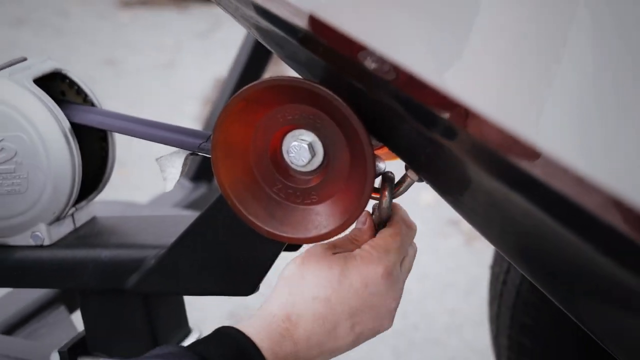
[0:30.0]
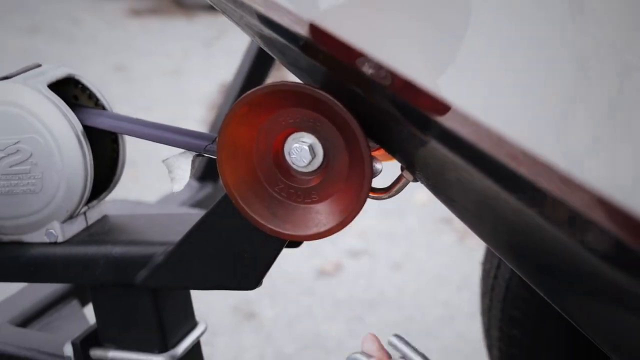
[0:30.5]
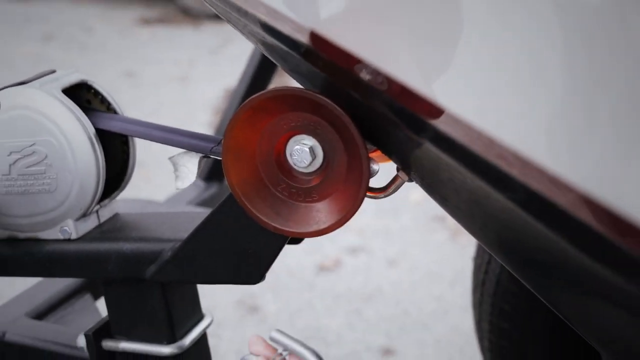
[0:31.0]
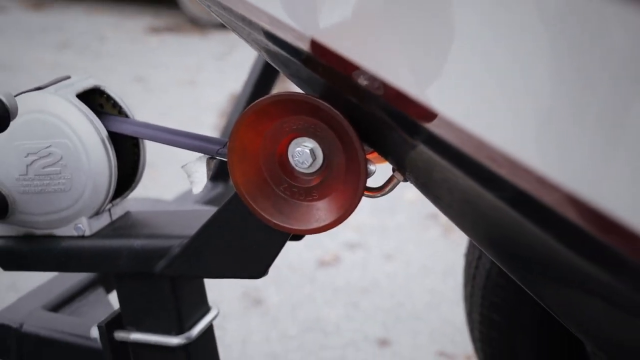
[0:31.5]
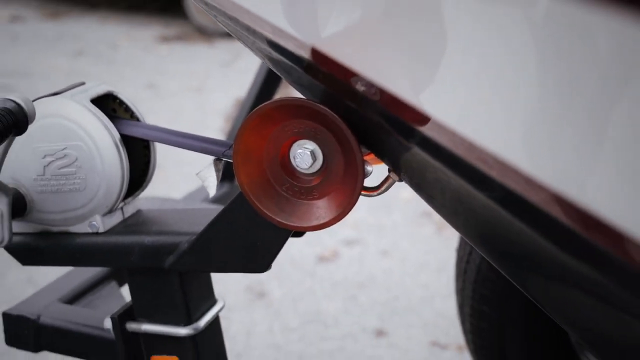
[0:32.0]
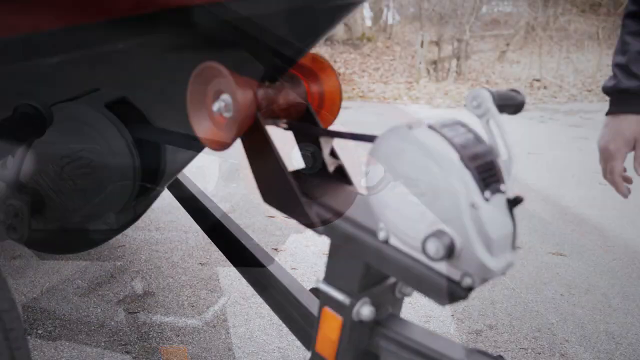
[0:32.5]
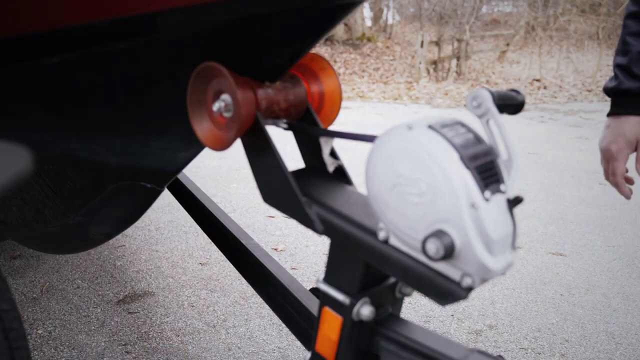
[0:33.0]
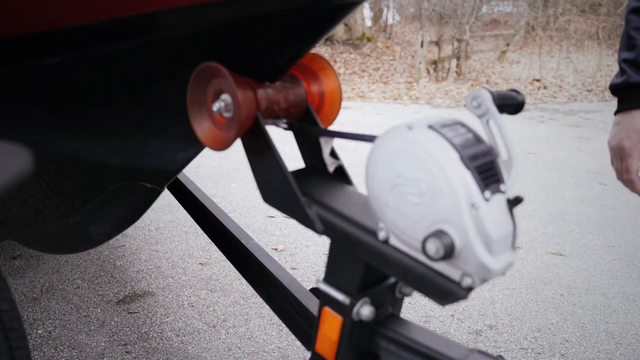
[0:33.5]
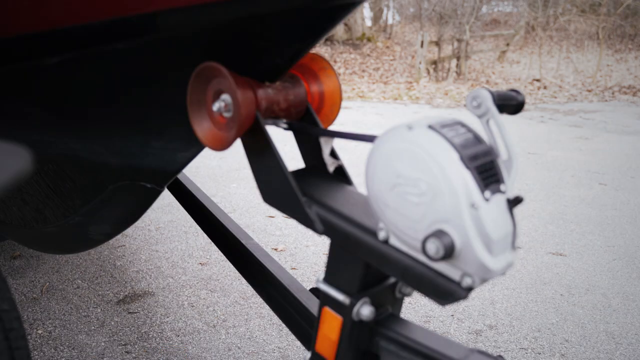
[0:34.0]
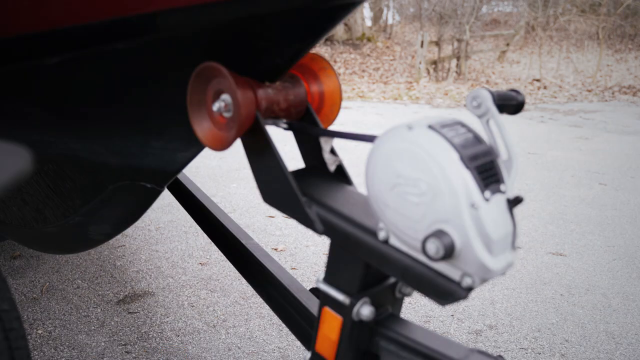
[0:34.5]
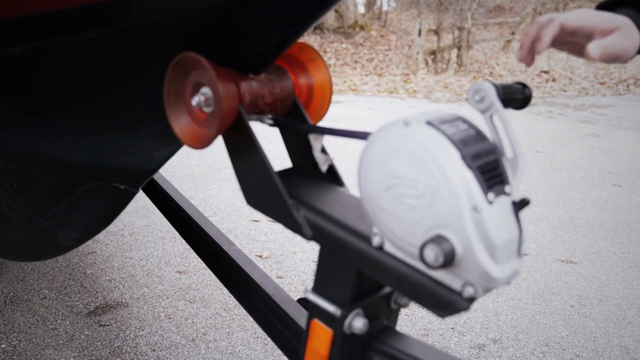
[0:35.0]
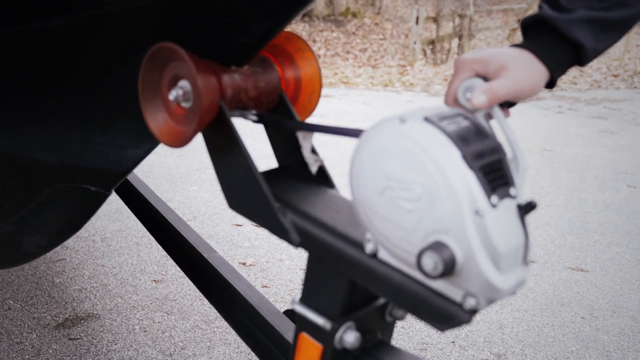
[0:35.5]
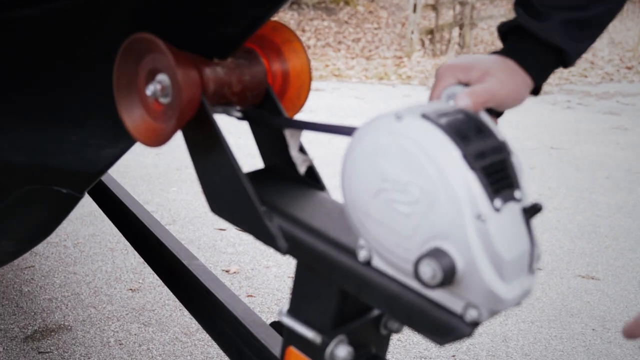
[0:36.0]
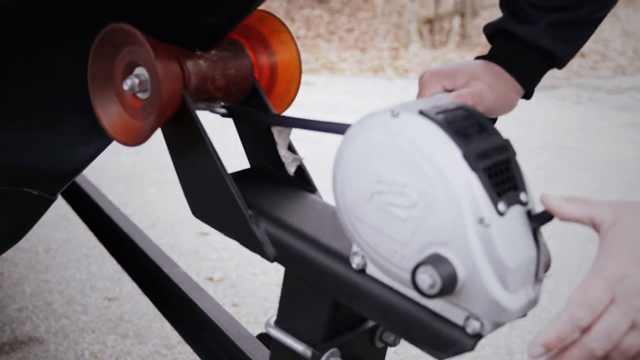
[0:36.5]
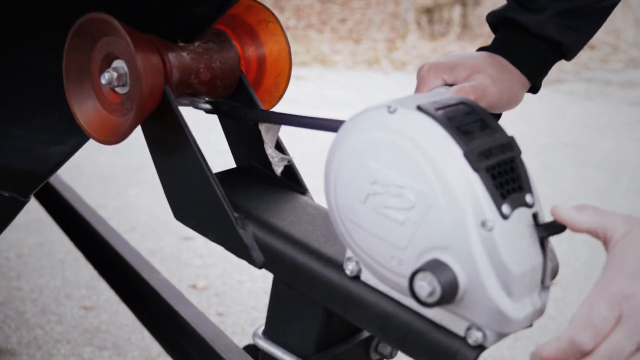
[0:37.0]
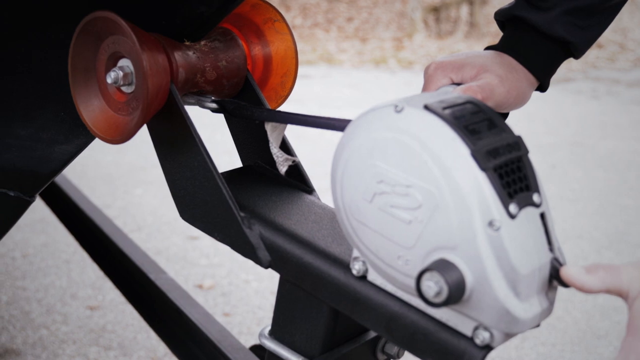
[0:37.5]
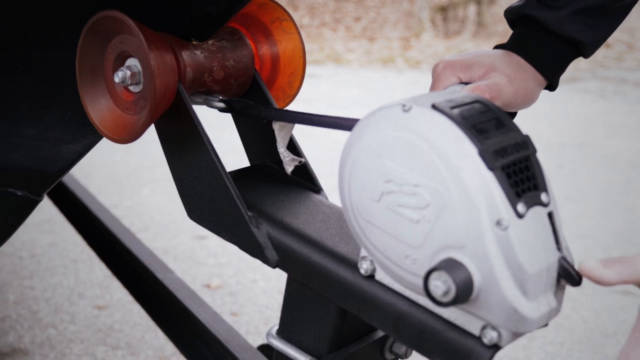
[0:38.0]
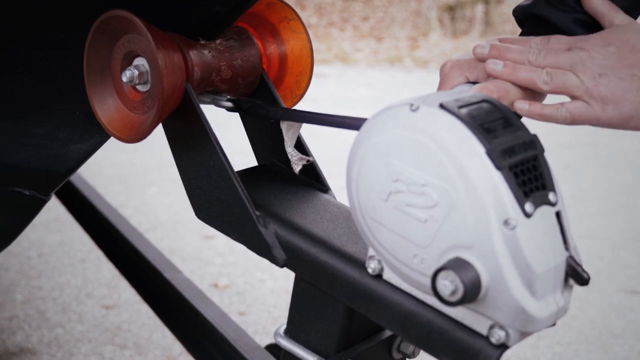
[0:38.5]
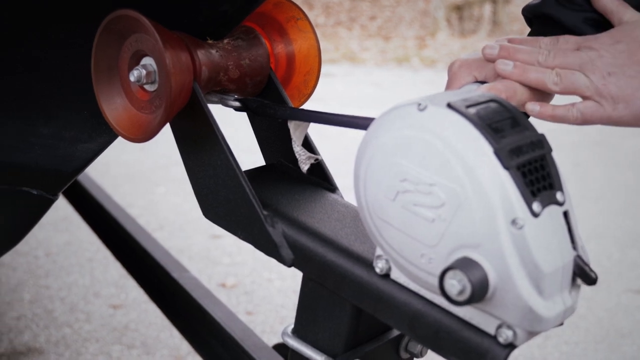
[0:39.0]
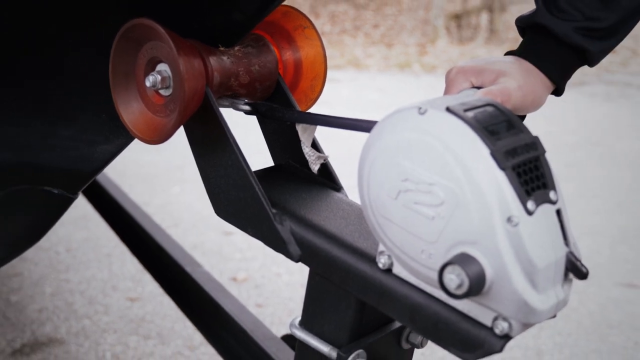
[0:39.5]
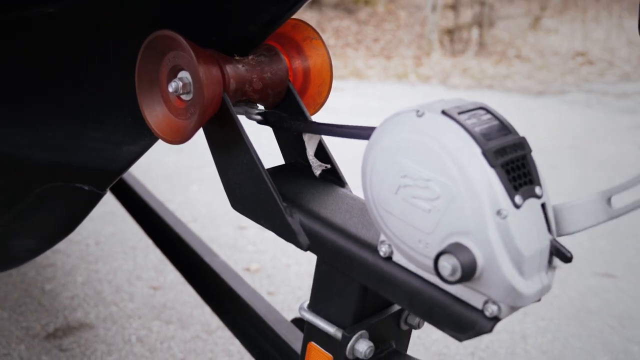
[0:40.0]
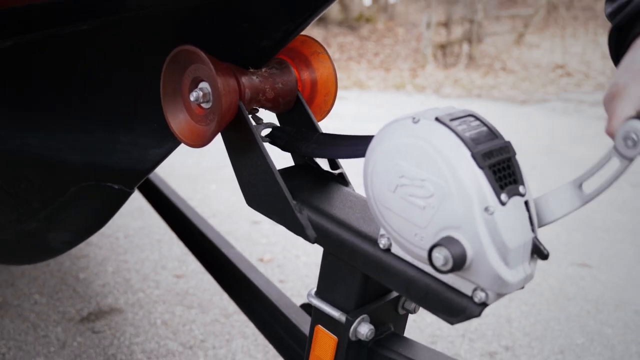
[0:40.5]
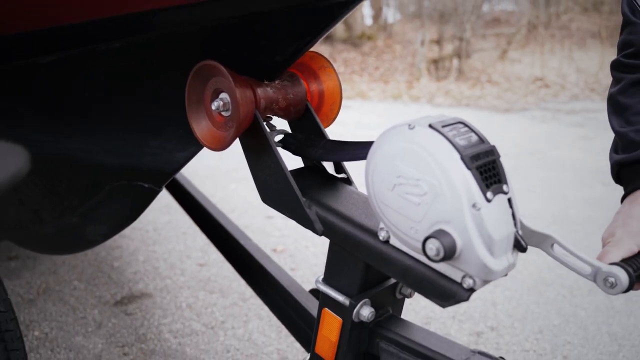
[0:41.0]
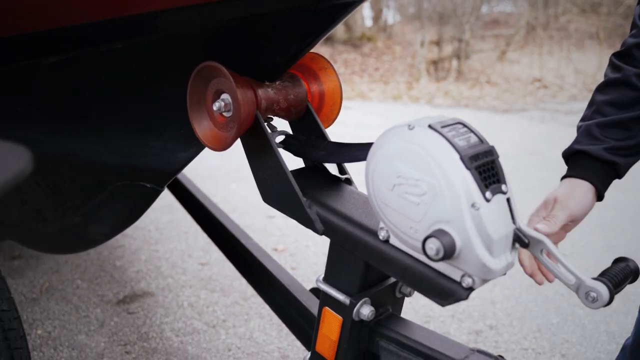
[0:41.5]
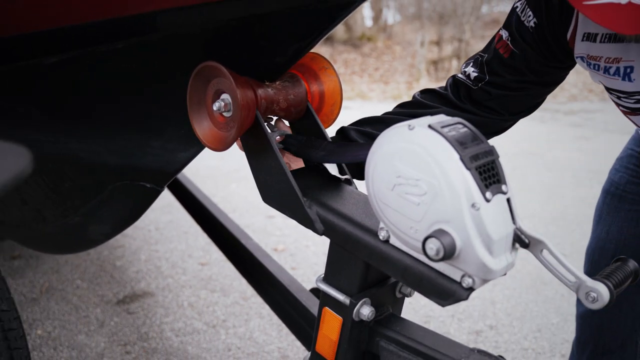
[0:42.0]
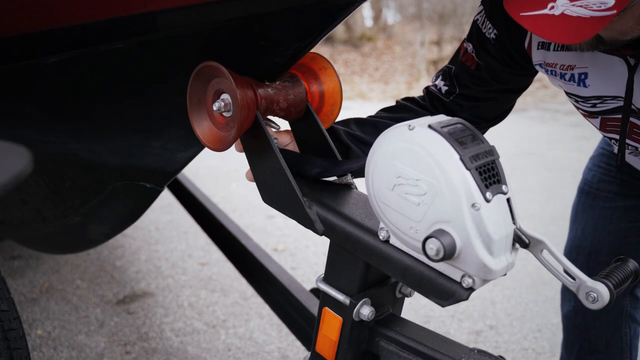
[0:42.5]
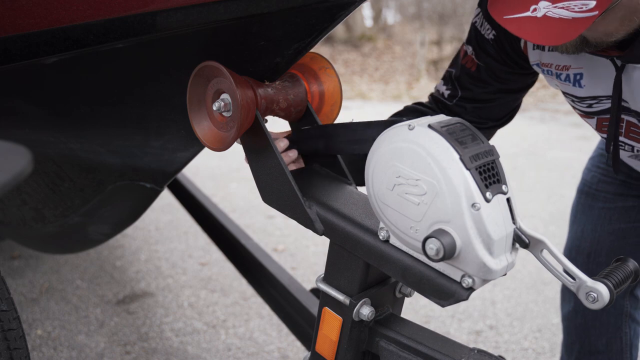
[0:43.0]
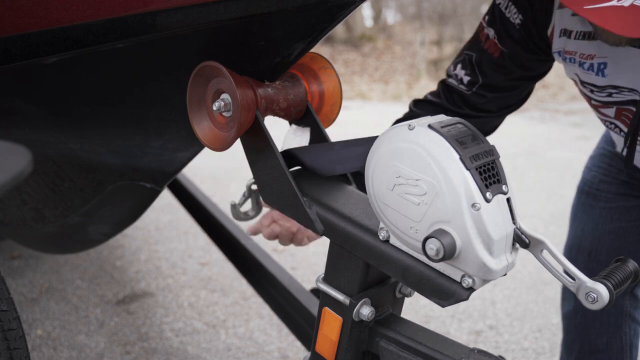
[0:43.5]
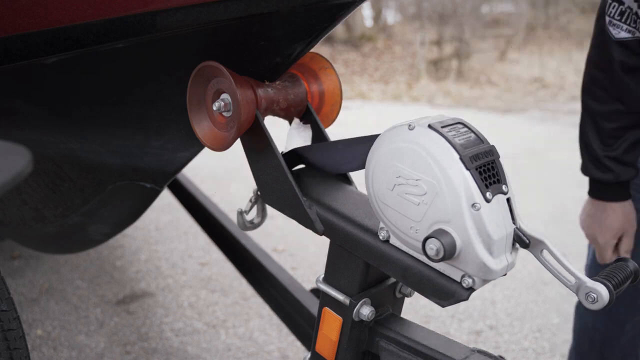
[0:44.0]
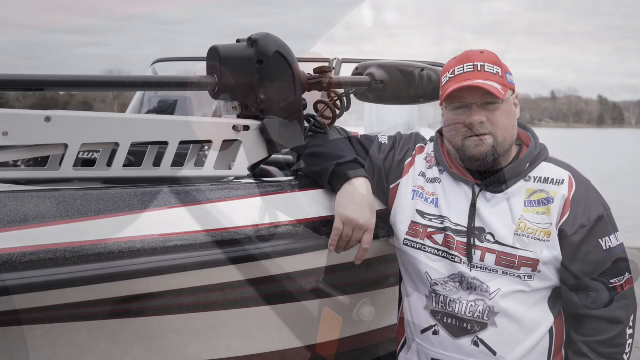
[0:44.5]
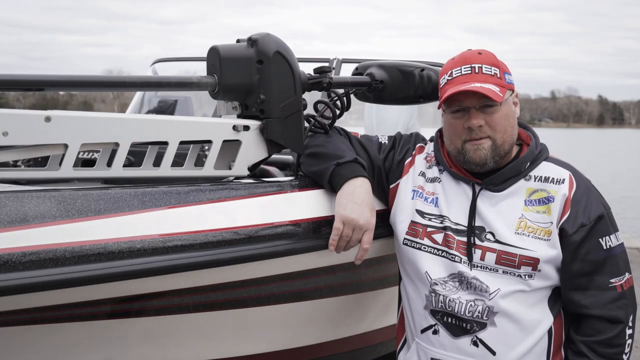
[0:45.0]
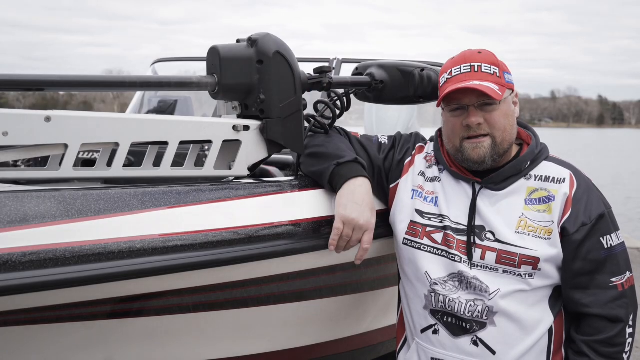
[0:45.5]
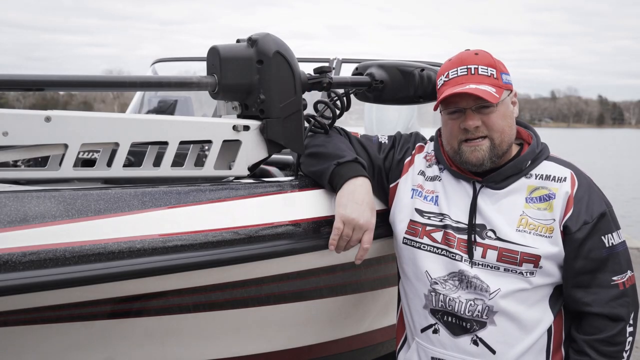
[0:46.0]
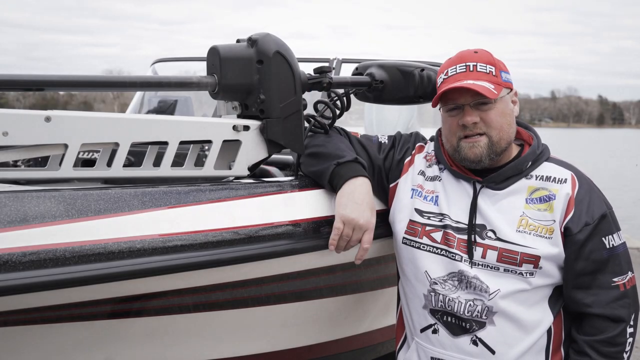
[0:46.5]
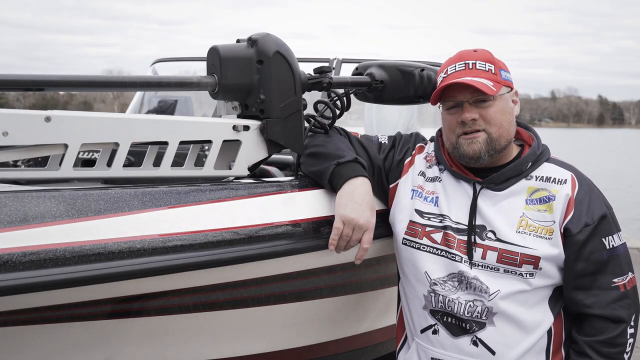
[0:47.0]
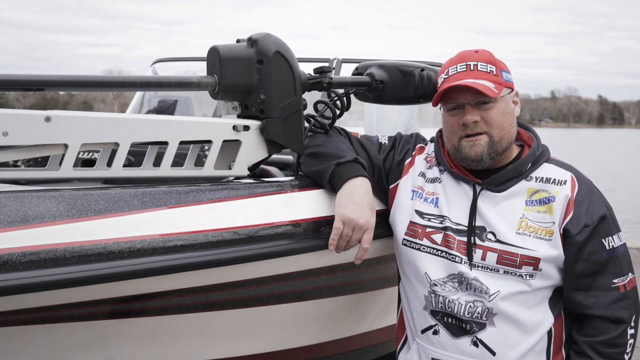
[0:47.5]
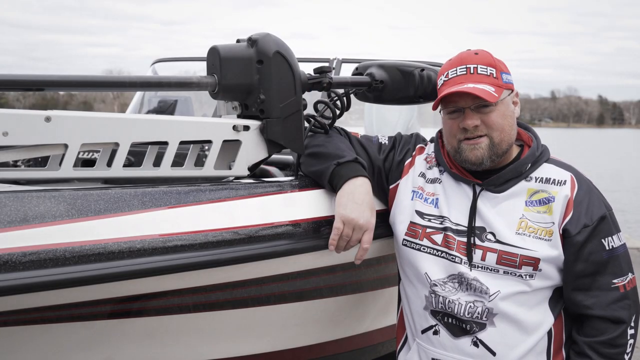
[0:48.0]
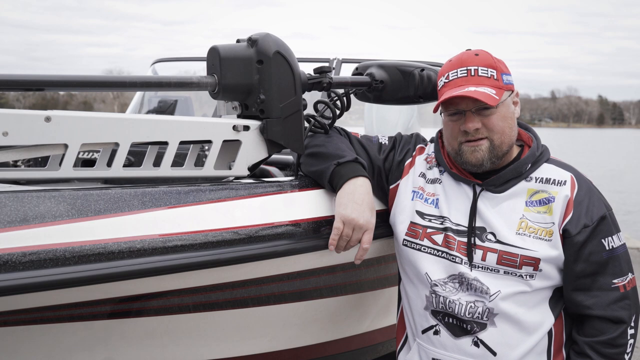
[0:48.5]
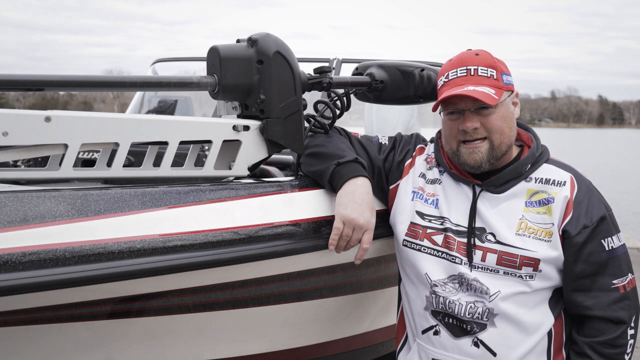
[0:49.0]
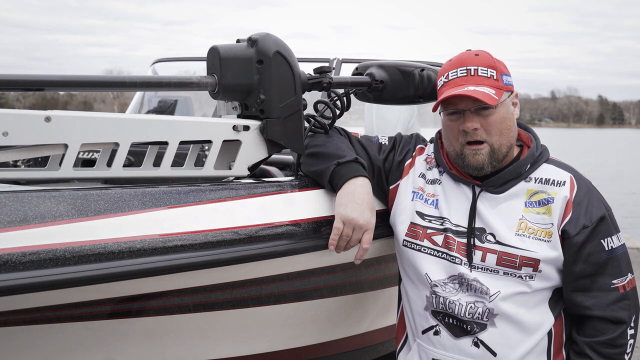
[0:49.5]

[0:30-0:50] The man unhooks a safety hook from the front of the boat. He then spins a crank, which has a rope attached to the boat, one time, and unhooks a second hook from the front of the boat; this second hook was hooked to the crank.